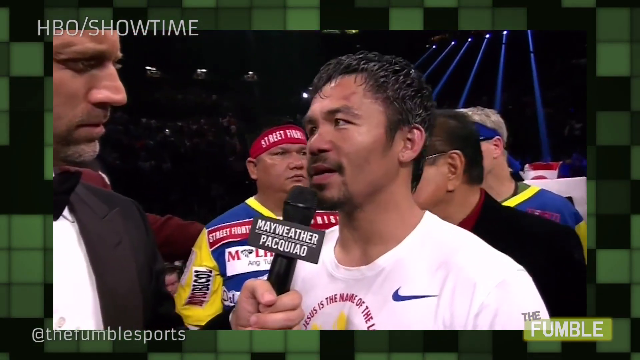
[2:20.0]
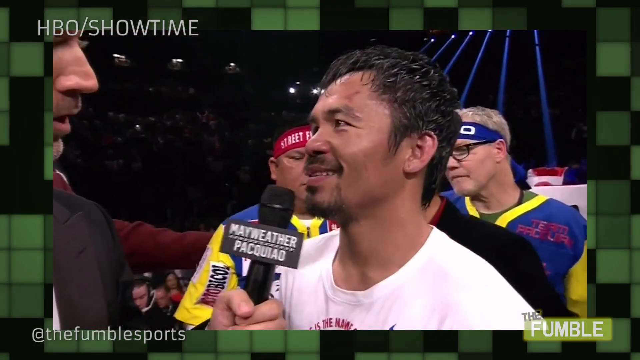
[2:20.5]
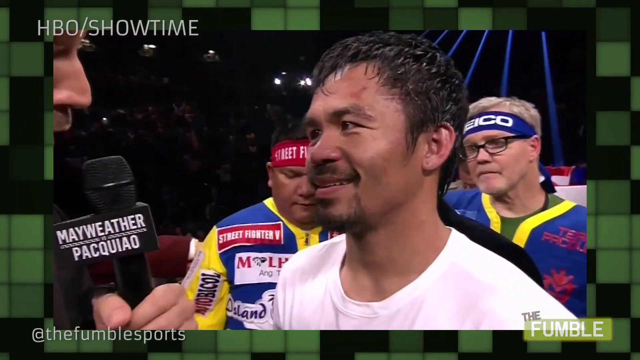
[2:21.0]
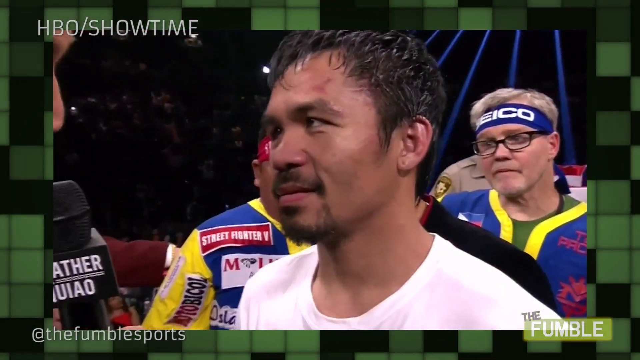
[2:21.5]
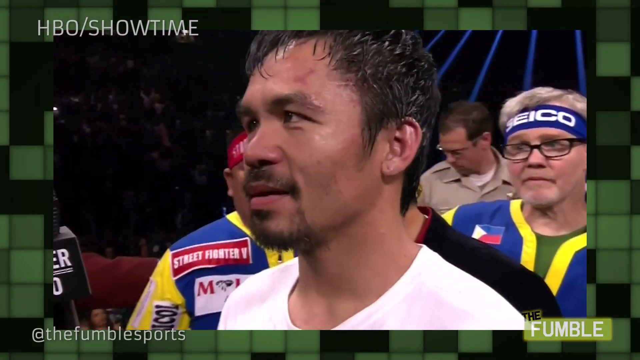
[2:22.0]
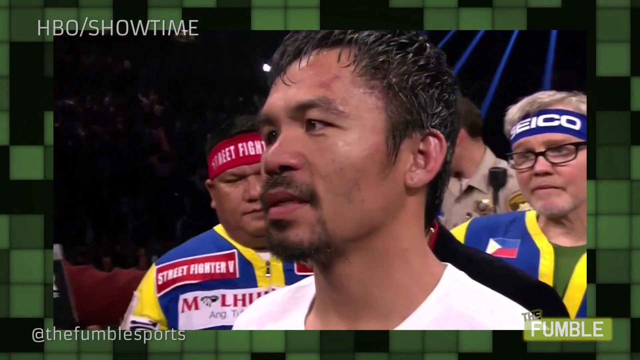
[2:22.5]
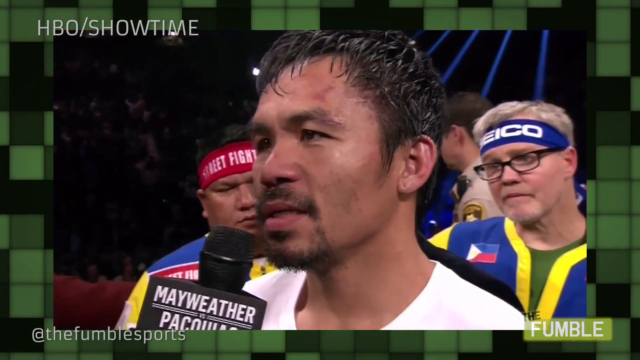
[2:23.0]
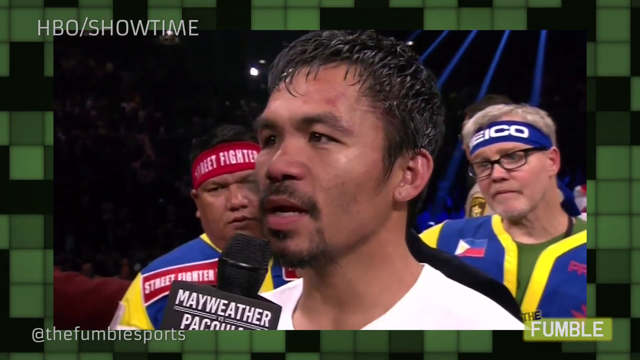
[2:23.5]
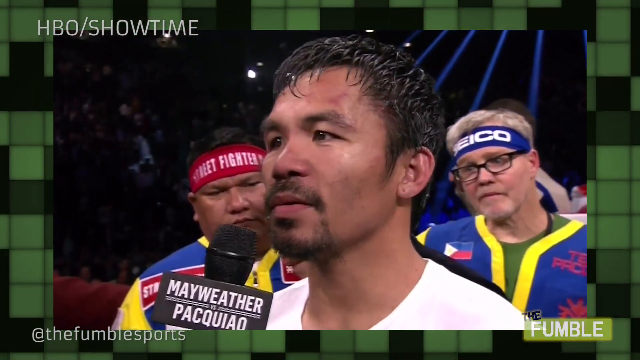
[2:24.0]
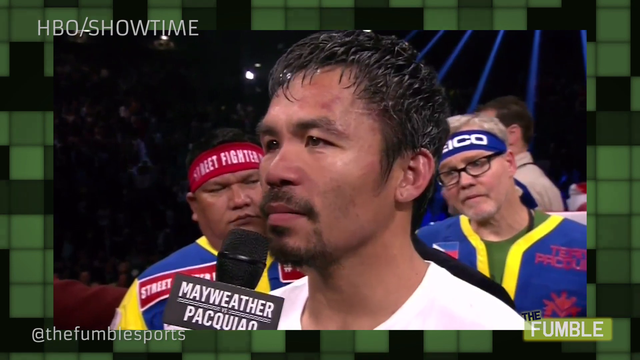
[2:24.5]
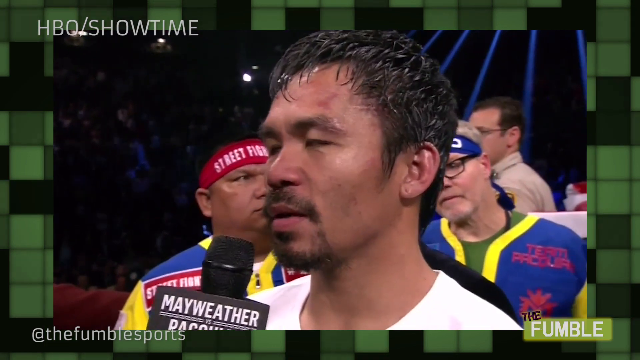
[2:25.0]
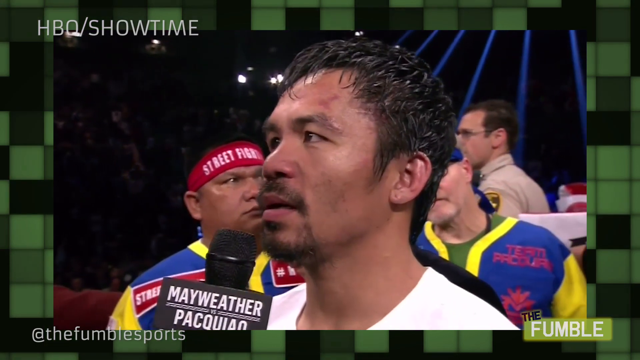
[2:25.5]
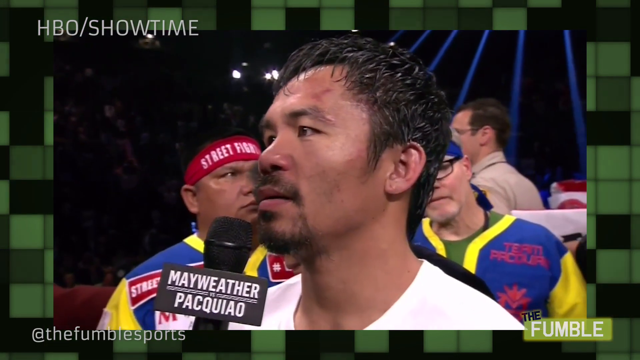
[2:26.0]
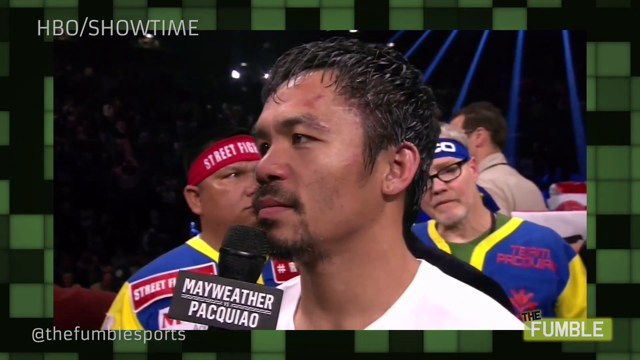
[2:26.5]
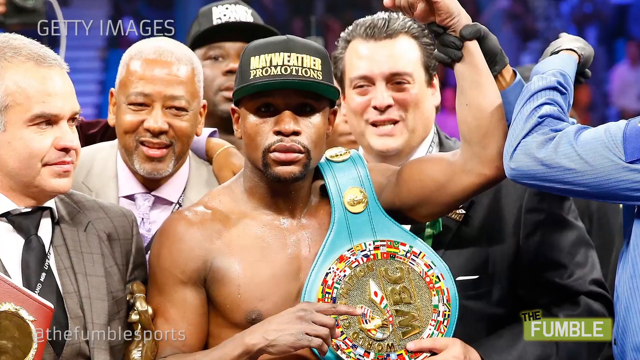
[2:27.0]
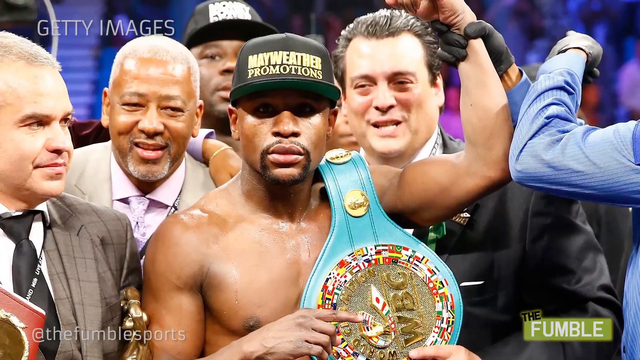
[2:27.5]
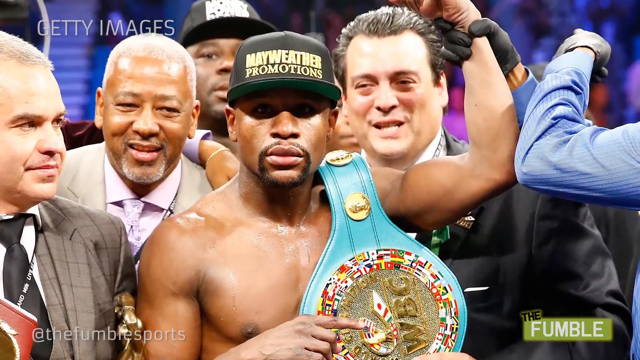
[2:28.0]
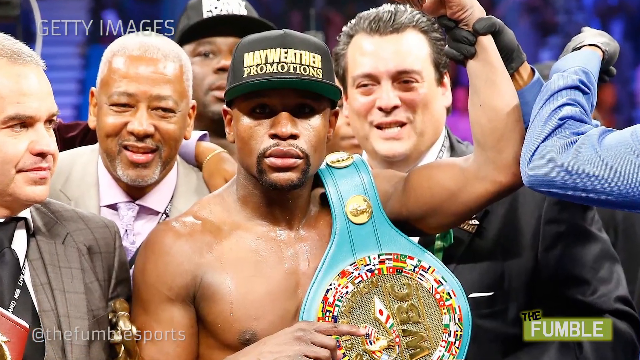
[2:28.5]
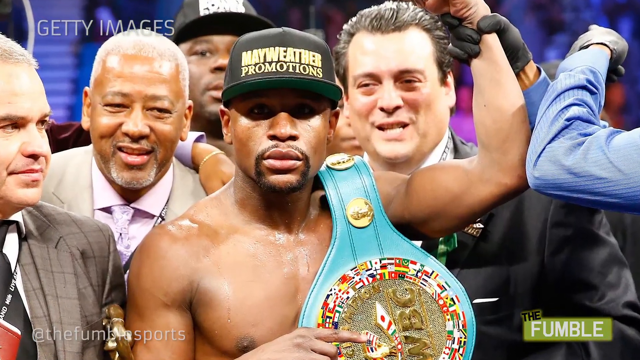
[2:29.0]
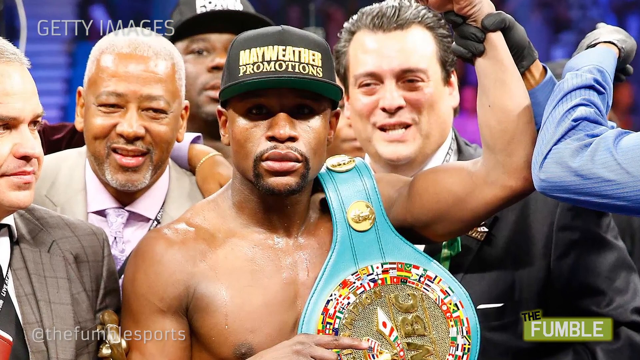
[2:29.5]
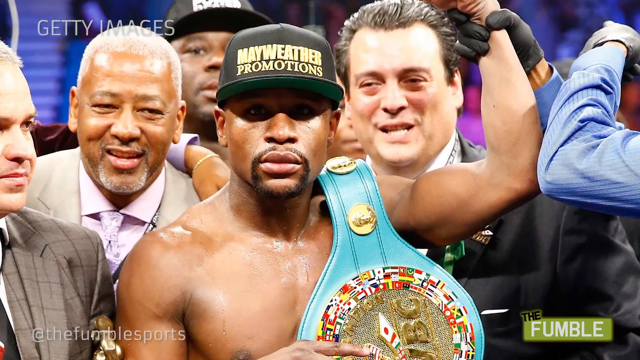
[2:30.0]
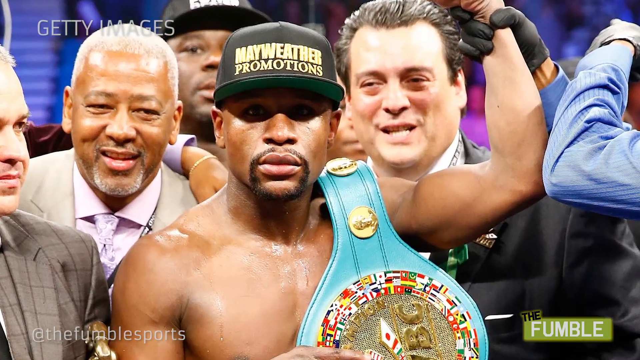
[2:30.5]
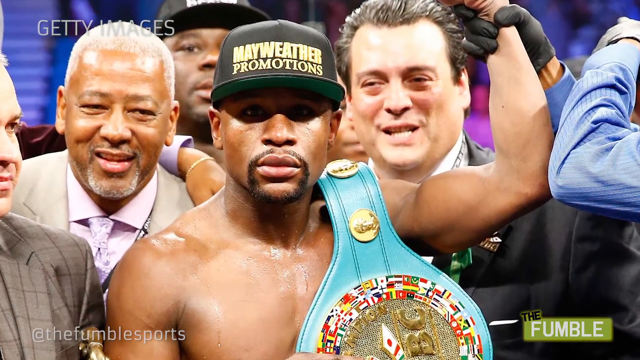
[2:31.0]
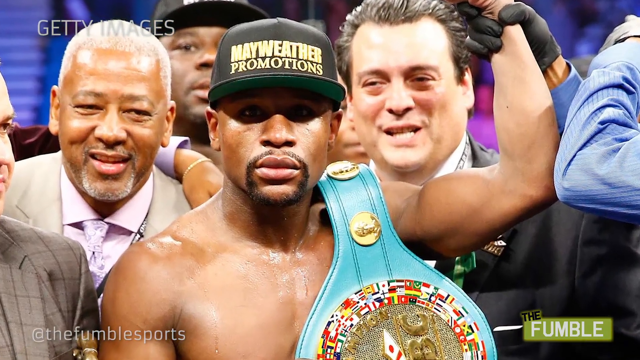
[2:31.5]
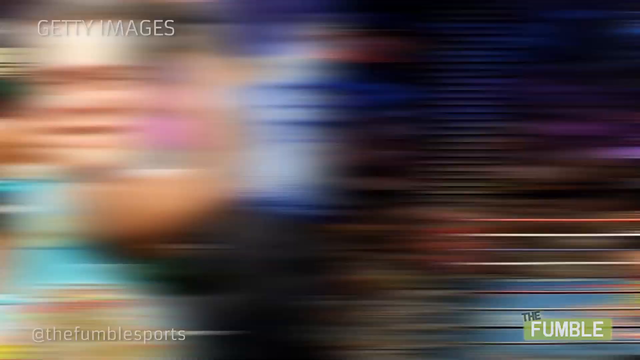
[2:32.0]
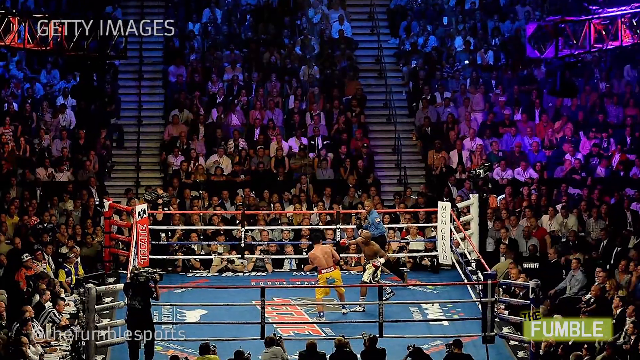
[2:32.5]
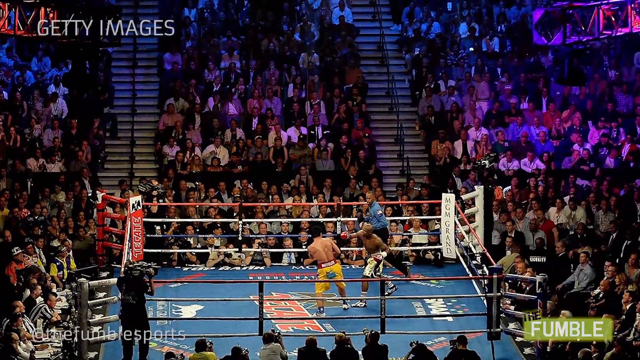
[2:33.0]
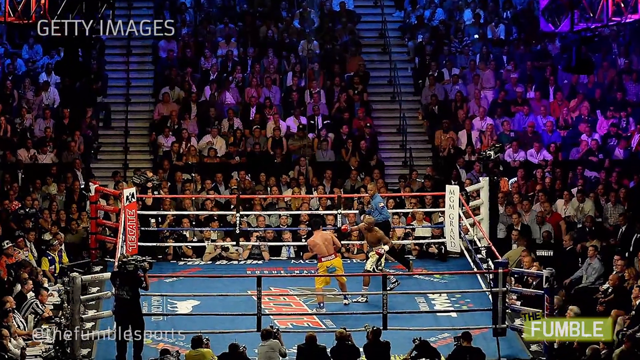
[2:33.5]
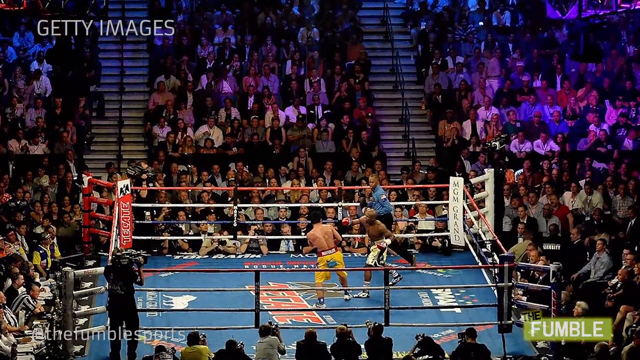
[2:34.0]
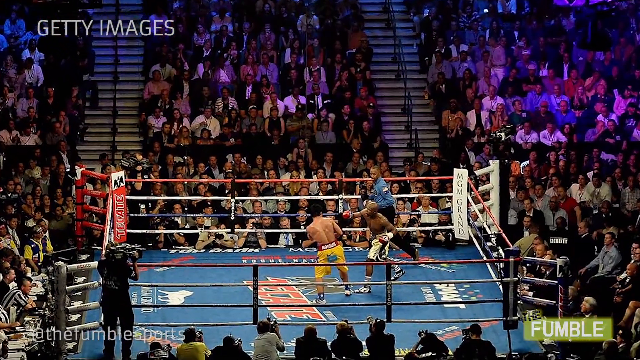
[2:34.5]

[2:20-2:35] Pacquiao is interviewed by a man wearing a suit. The interview appears to be post-fight, as Pacquiao has visible bruises on his face; he wears a white t-shirt but still looks sweaty, as though he has just finished a sports match. Behind him are some other people wearing headbands, one of which says "Street Fighter". The video changes to a still photograph of Mayweather wearing a black cap that says "Mayweather Promotions" in gold text. He carries a WBC medal belt on his left shoulder, has no top on and is covered in sweat, with a crowd of people behind him. Another still photograph shows the boxing ring with a large crowd of people surrounding it, taken mid-fight as Mayweather leans forward to throw a punch toward Pacquiao.